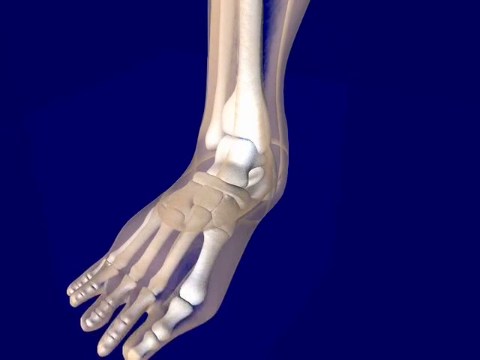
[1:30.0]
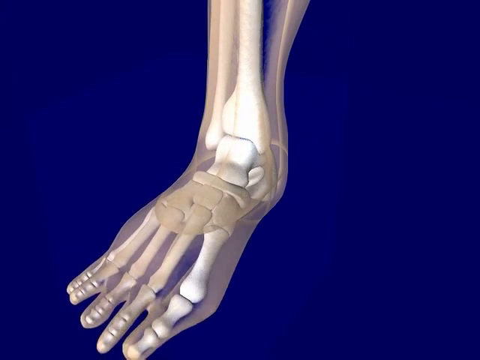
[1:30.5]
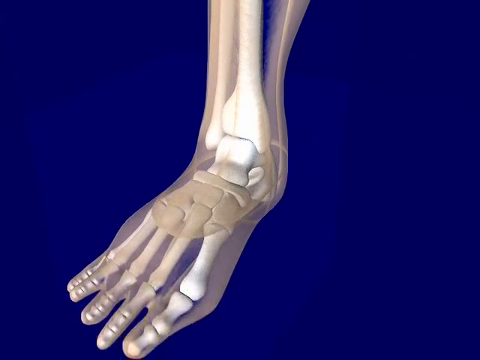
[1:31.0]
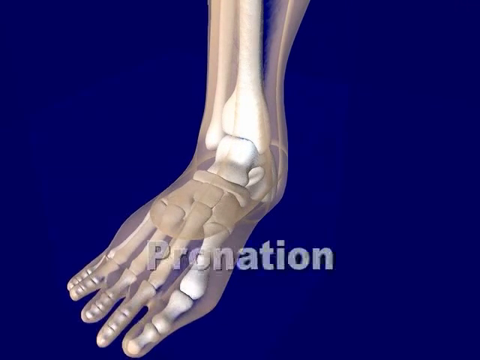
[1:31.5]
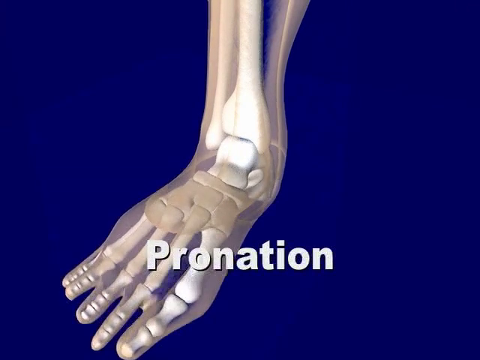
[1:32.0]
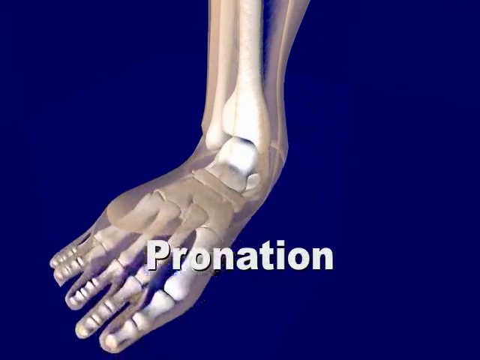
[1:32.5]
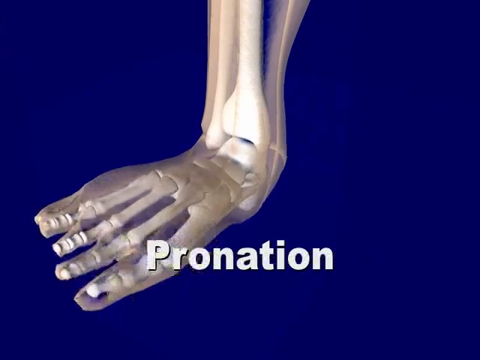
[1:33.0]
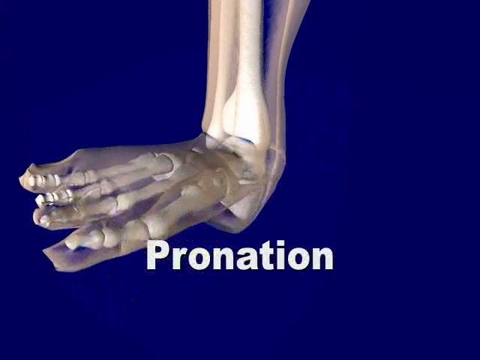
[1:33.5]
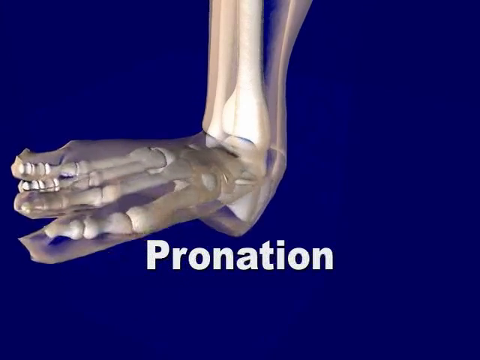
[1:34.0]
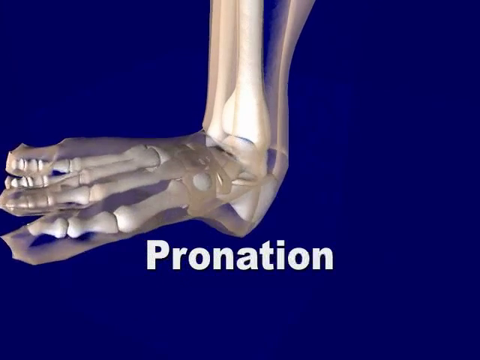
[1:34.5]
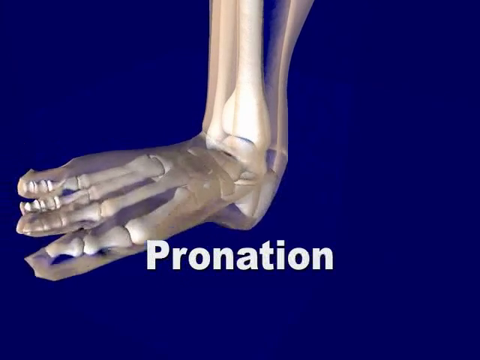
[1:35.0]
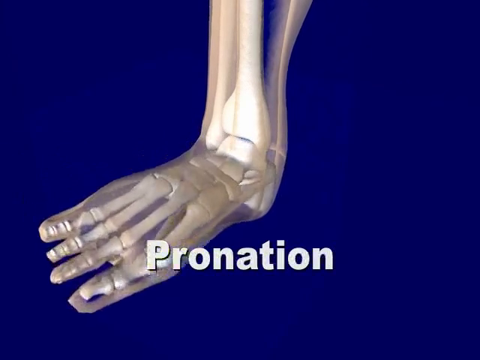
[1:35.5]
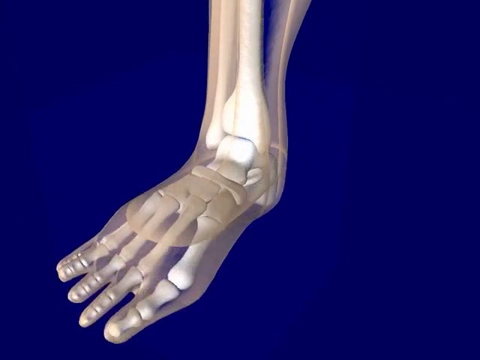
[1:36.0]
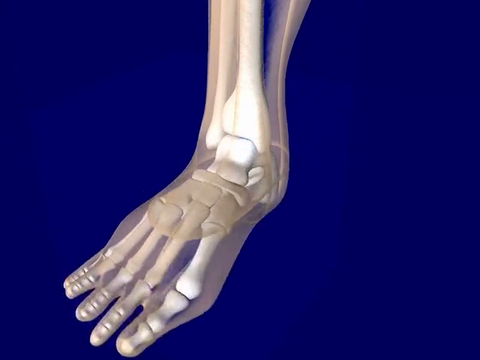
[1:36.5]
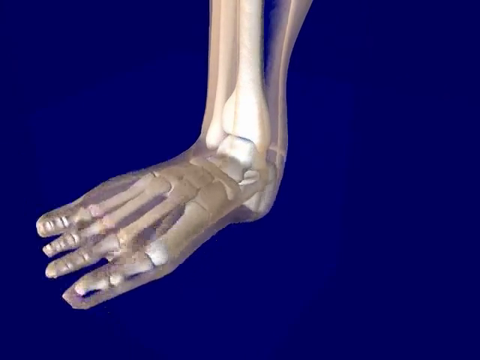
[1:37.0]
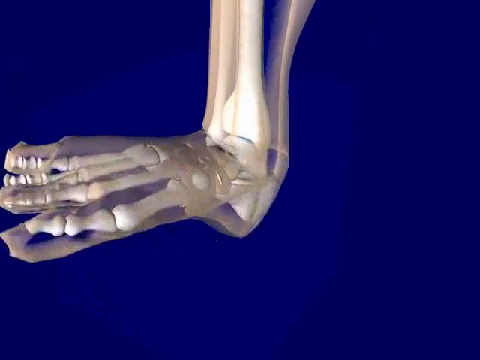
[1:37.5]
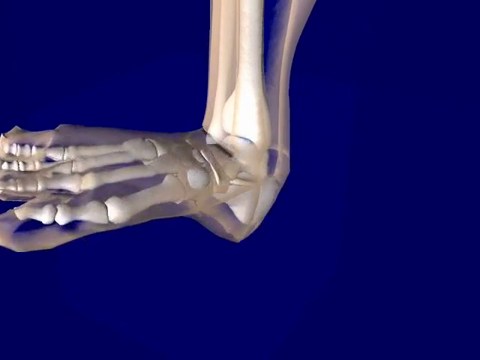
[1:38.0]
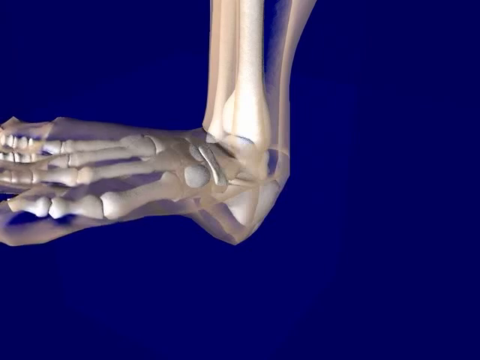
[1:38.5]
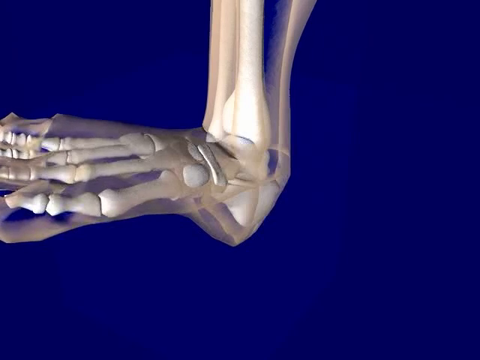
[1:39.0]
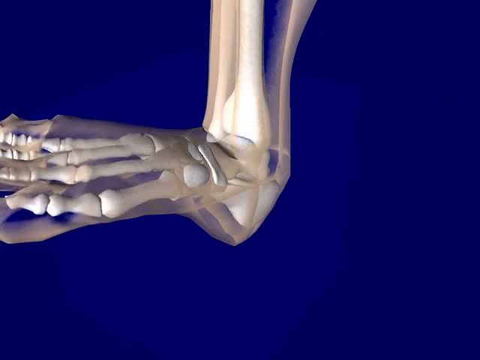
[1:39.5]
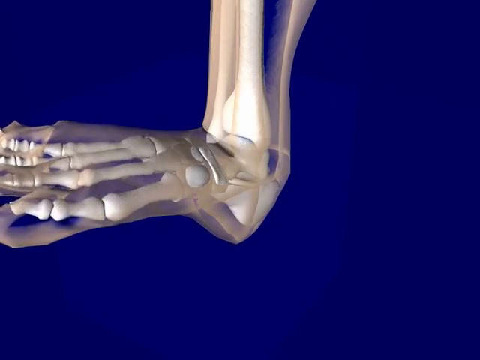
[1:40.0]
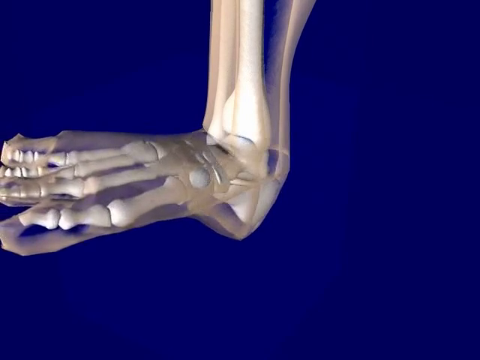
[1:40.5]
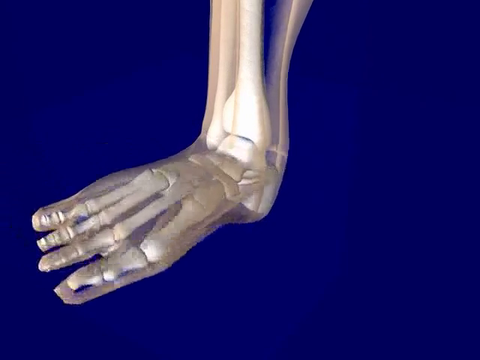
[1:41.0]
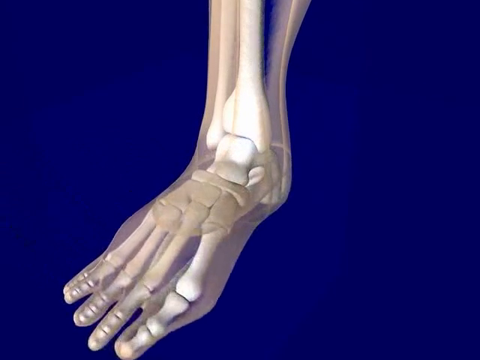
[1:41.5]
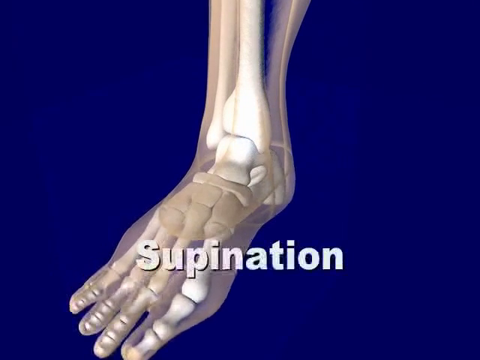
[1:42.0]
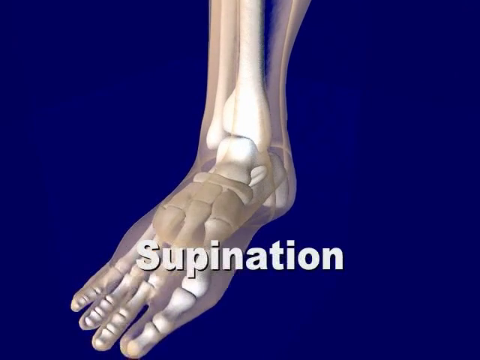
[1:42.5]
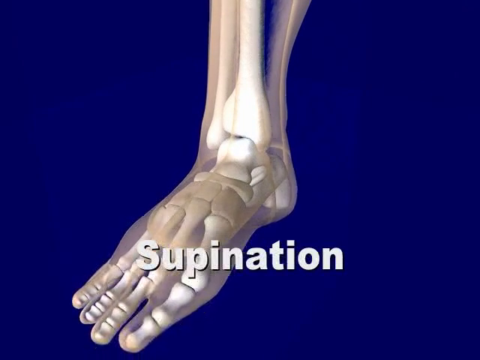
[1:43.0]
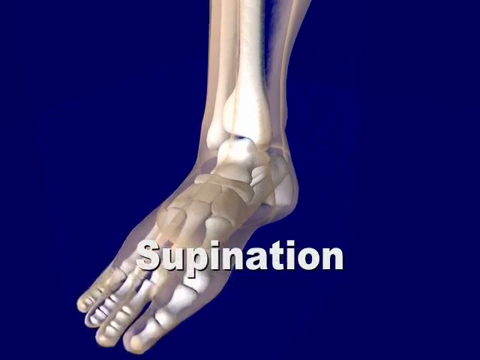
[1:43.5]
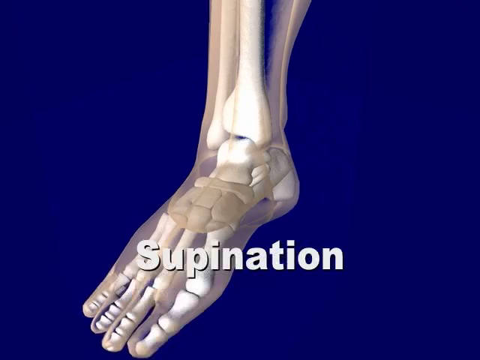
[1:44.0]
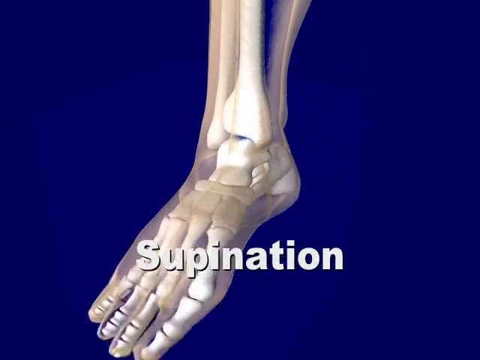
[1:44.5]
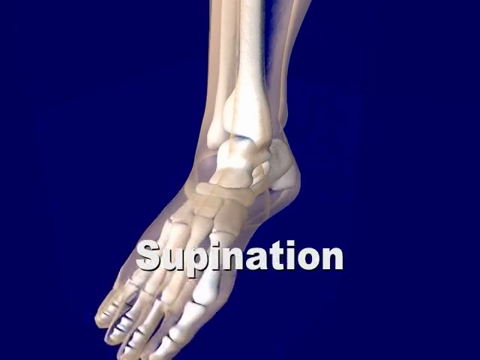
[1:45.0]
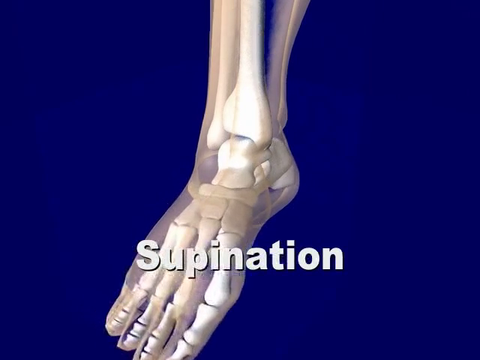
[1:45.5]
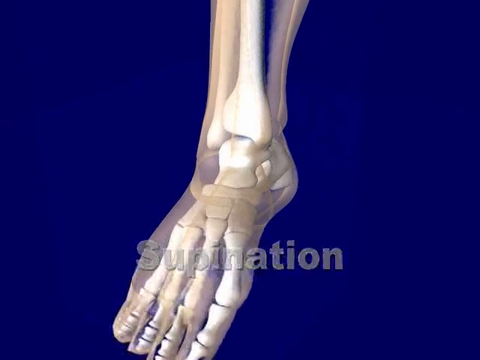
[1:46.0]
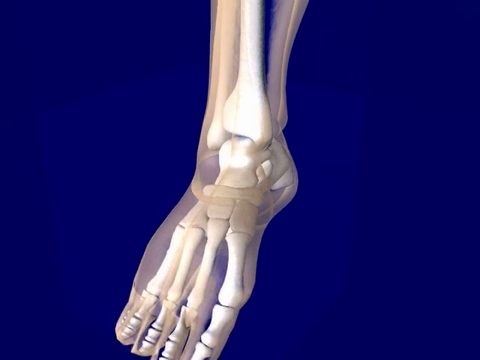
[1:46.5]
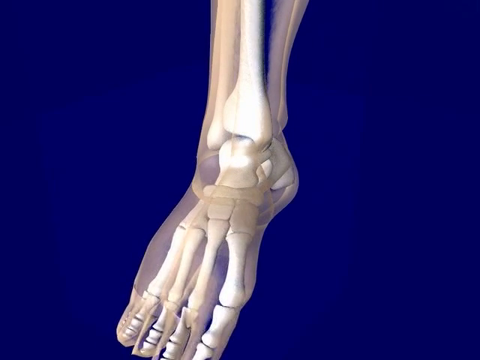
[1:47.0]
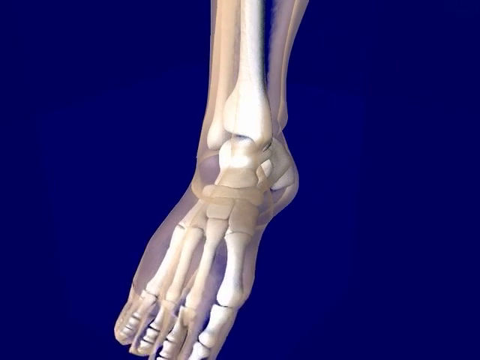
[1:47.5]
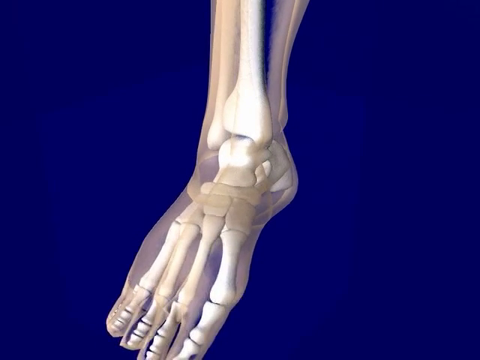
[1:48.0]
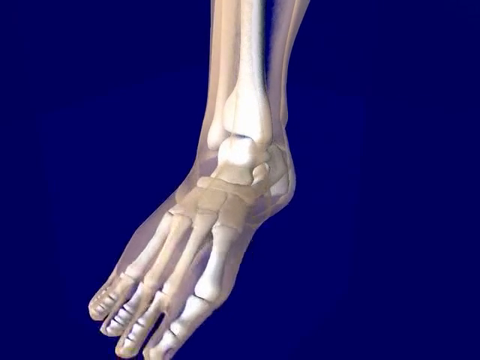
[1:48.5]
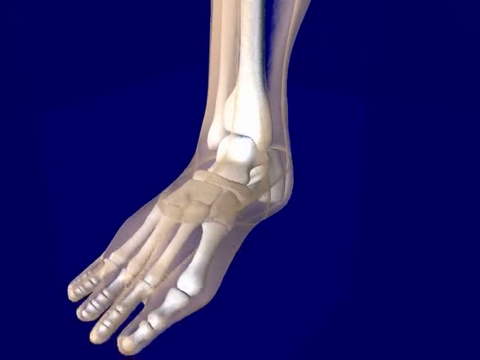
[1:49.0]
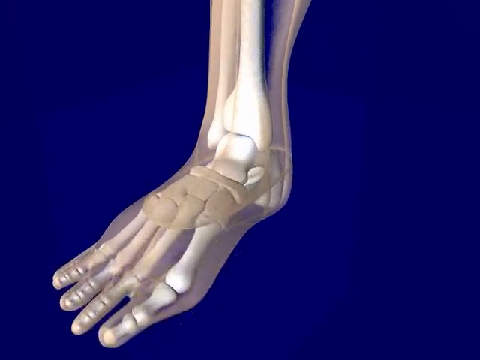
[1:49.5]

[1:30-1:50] An x-ray view of an ankle and foot shows the bones in the foot. The foot is raised and lowered at an angle, and this movement is labeled "pronation." The foot then changes direction a bit, labeled "supination," with the toes brought in a little and then moving up and down. Each movement is labeled according to how the foot is moving. The see-through leg shows only the bones, revealing how the foot interconnects with the ankle bone and how the bones work together with the ankle and lower leg.